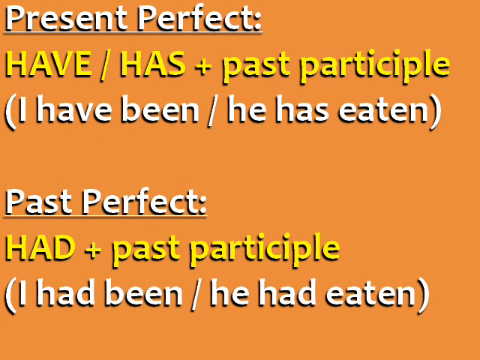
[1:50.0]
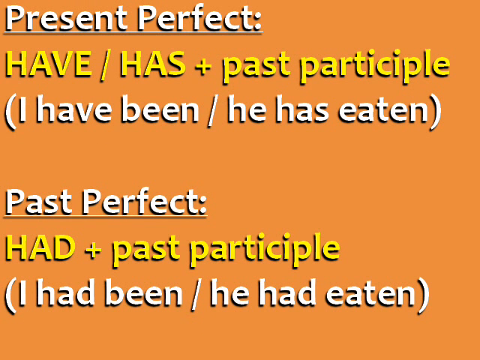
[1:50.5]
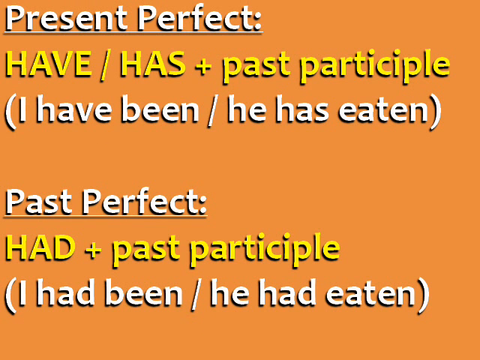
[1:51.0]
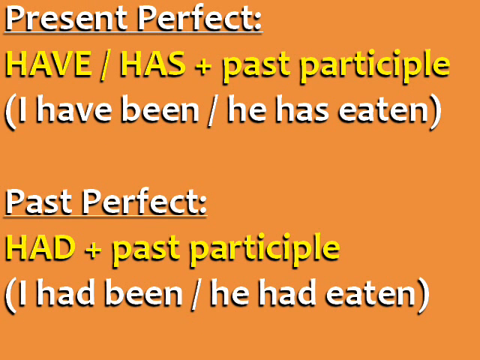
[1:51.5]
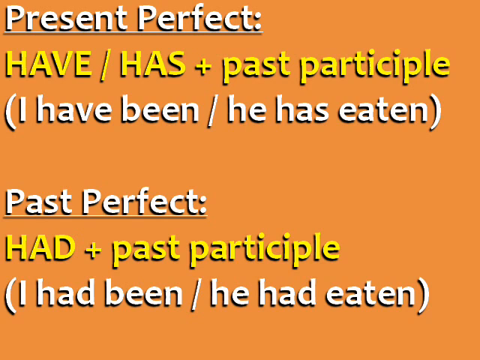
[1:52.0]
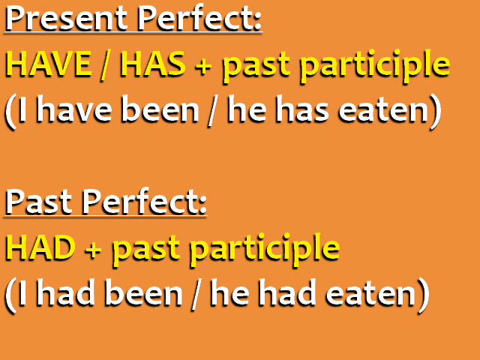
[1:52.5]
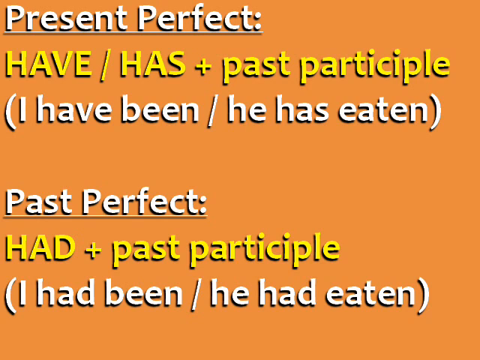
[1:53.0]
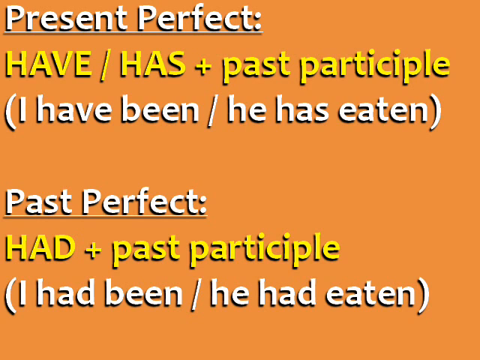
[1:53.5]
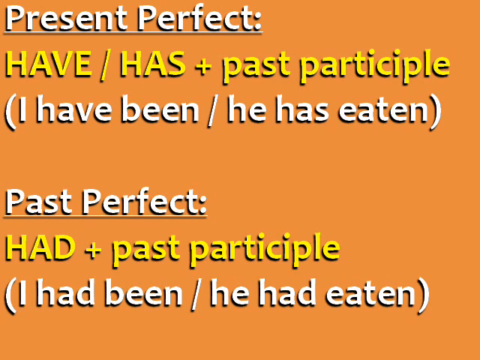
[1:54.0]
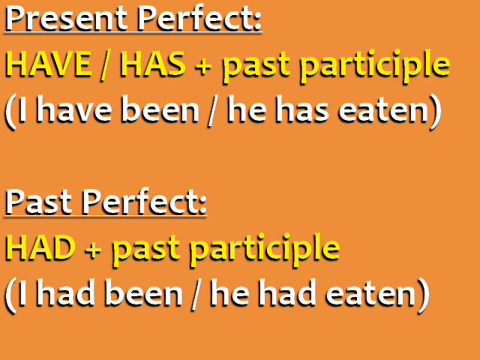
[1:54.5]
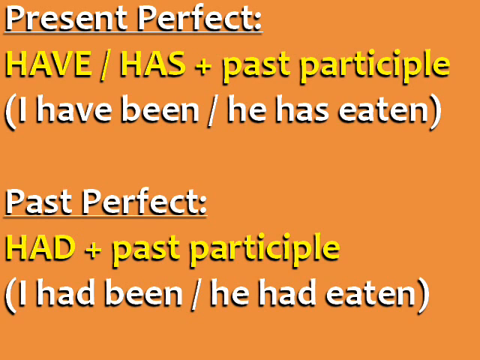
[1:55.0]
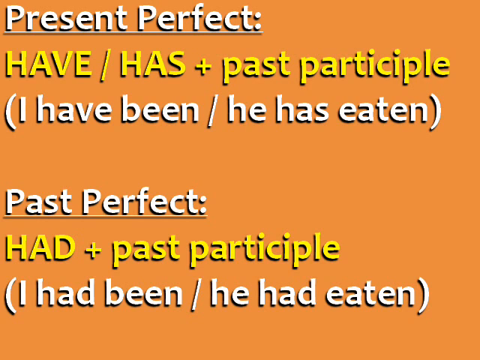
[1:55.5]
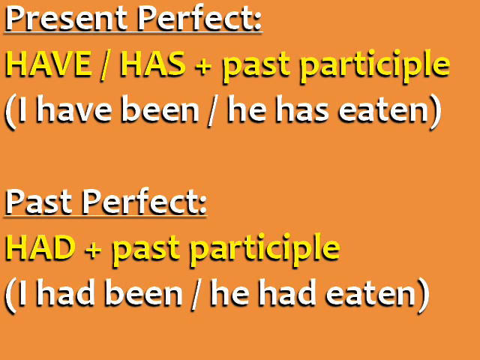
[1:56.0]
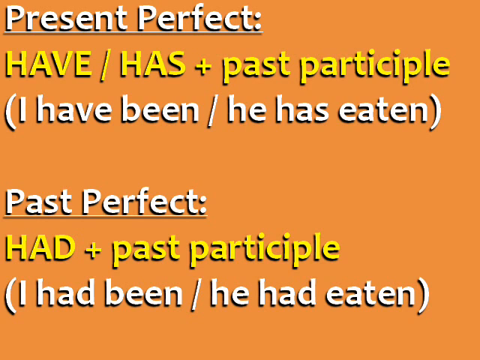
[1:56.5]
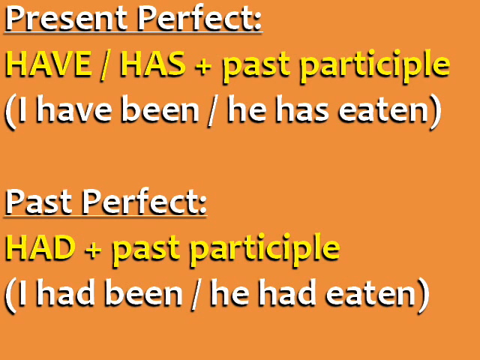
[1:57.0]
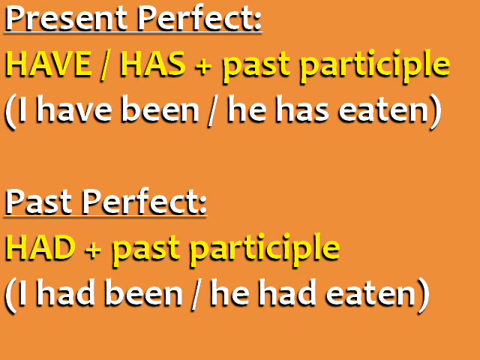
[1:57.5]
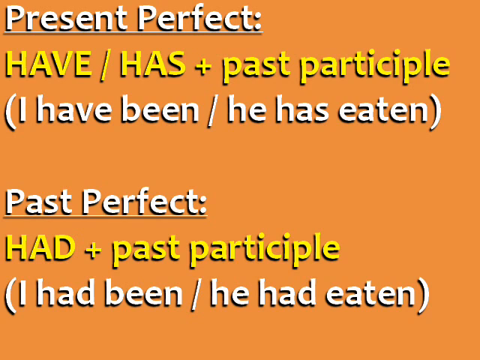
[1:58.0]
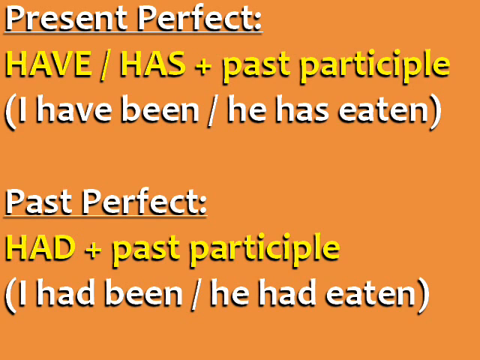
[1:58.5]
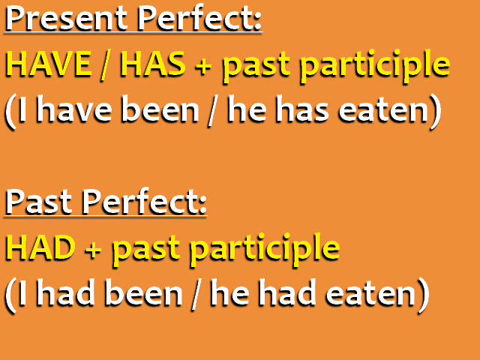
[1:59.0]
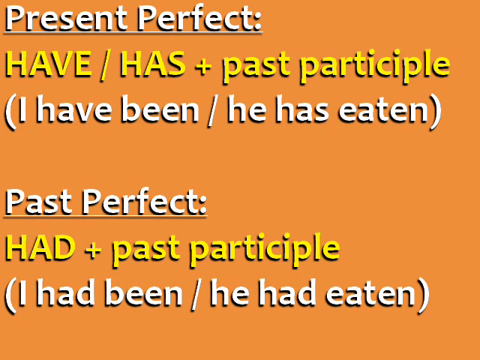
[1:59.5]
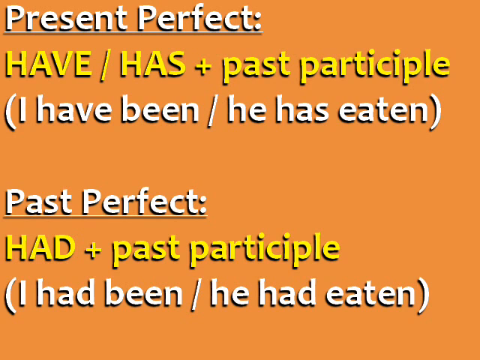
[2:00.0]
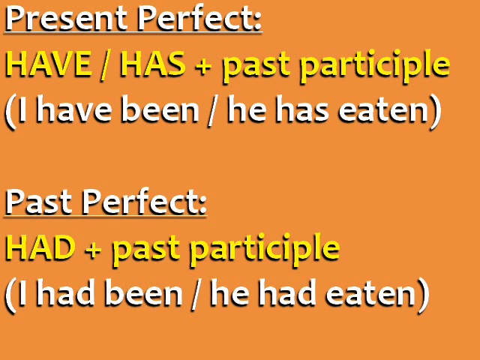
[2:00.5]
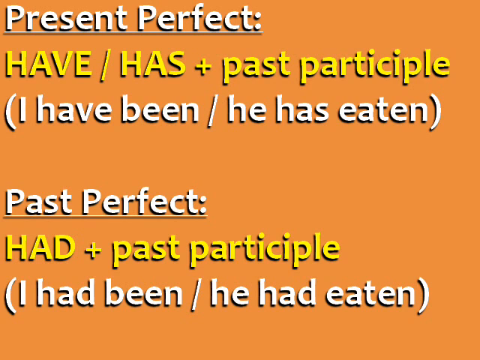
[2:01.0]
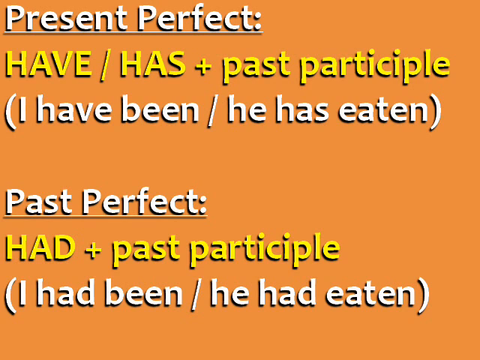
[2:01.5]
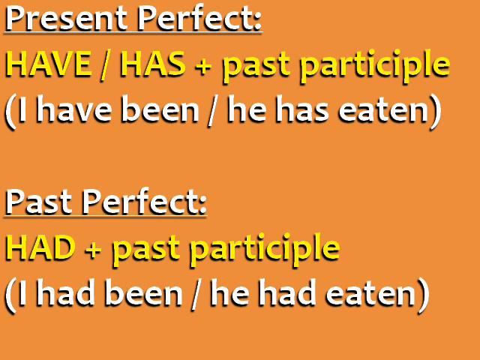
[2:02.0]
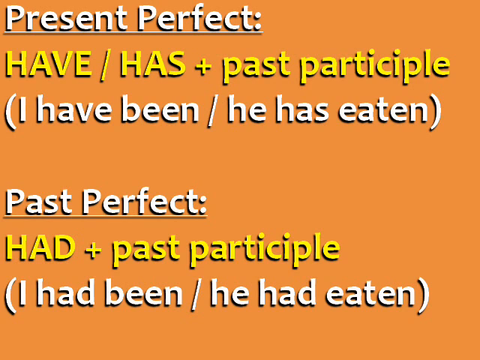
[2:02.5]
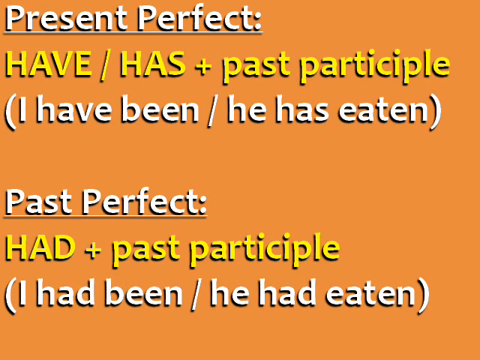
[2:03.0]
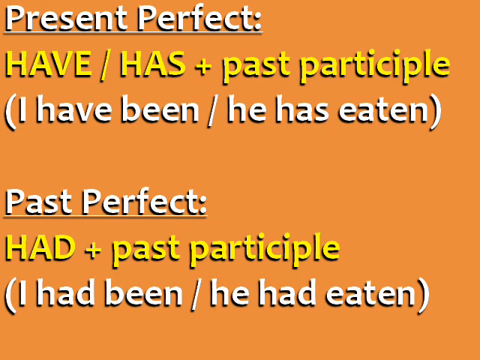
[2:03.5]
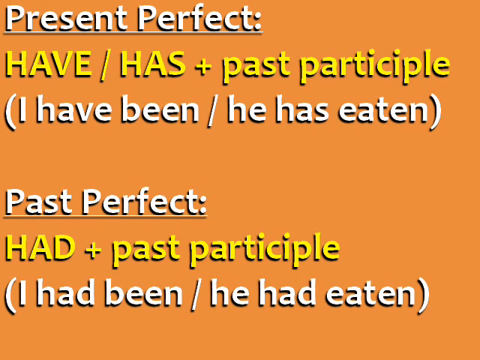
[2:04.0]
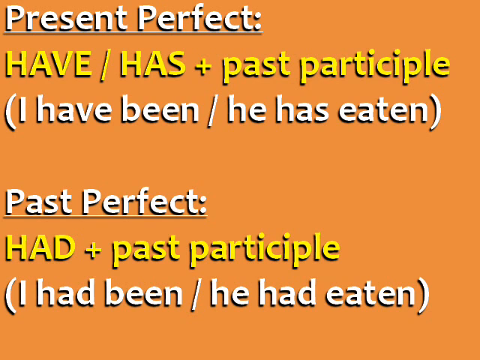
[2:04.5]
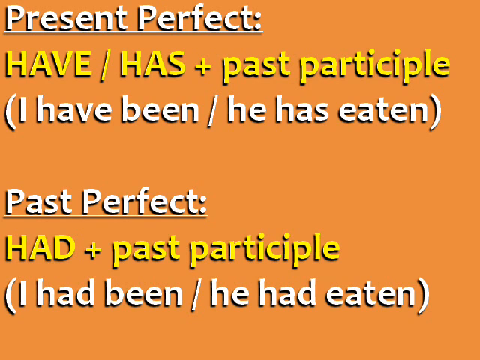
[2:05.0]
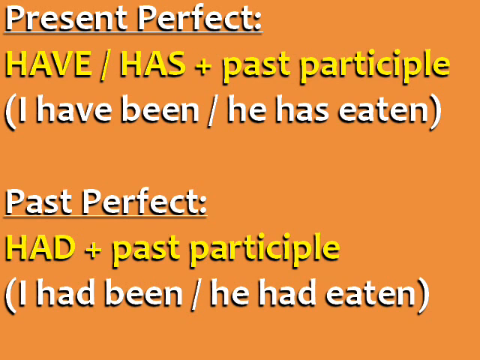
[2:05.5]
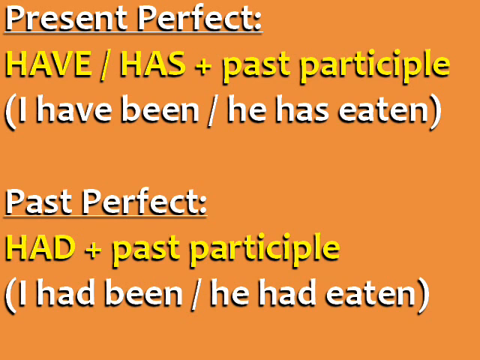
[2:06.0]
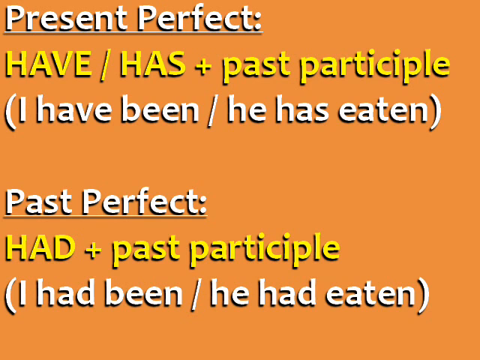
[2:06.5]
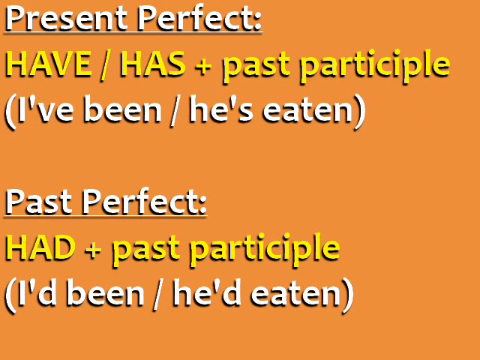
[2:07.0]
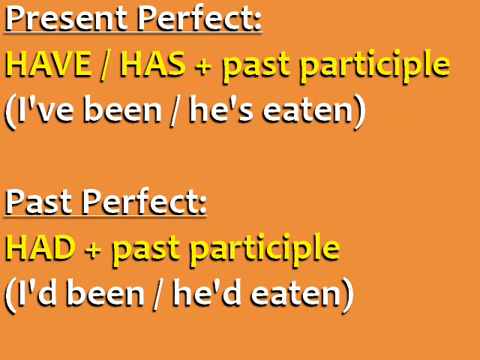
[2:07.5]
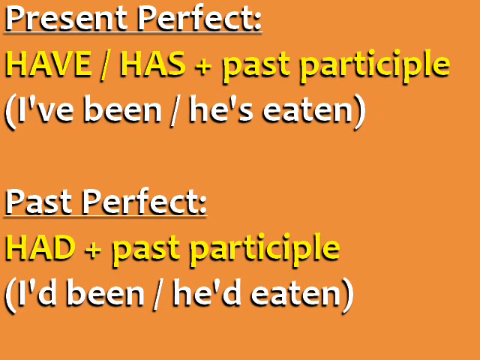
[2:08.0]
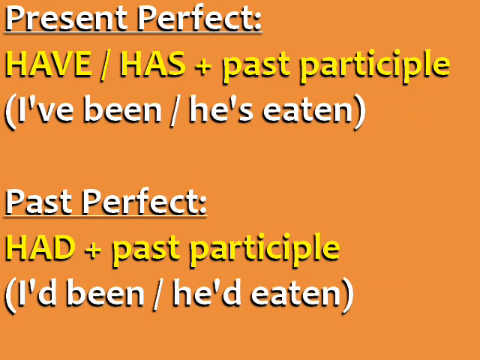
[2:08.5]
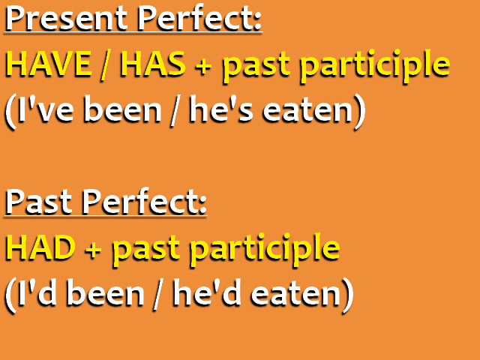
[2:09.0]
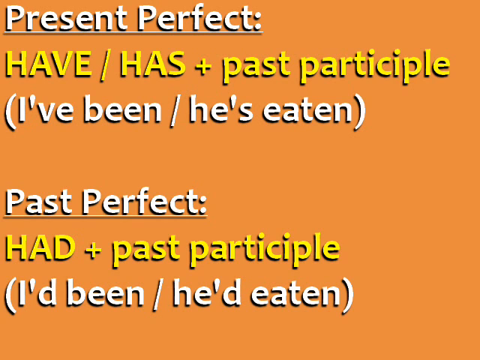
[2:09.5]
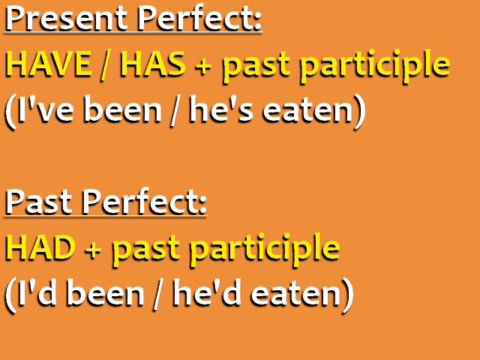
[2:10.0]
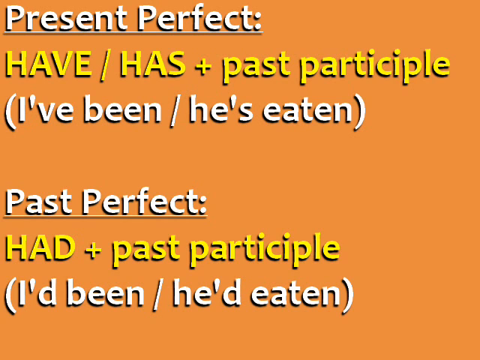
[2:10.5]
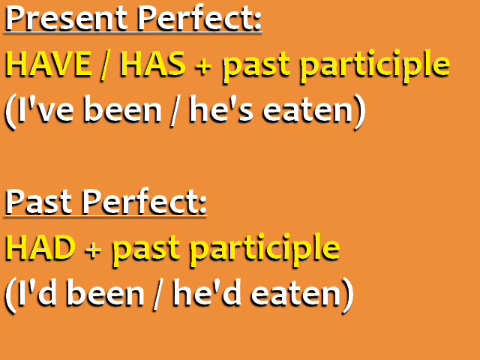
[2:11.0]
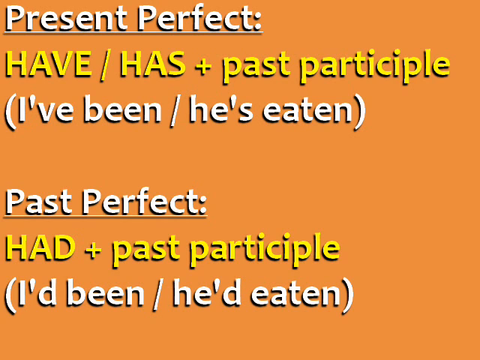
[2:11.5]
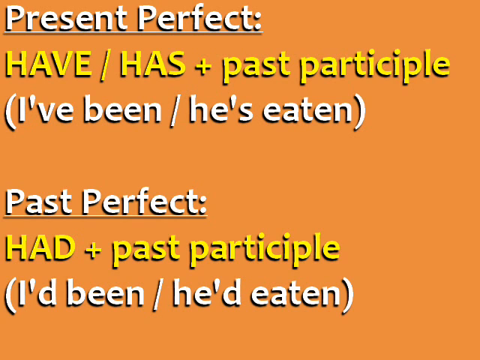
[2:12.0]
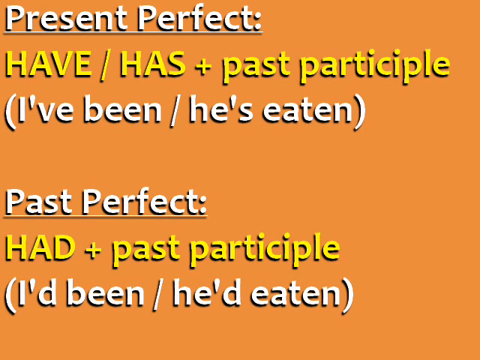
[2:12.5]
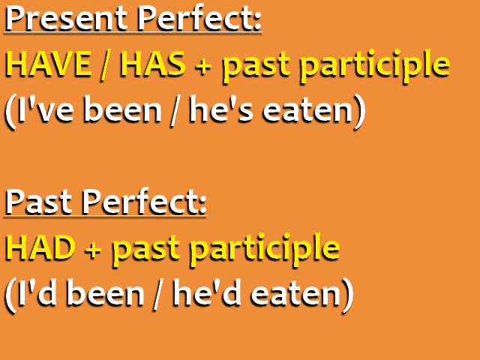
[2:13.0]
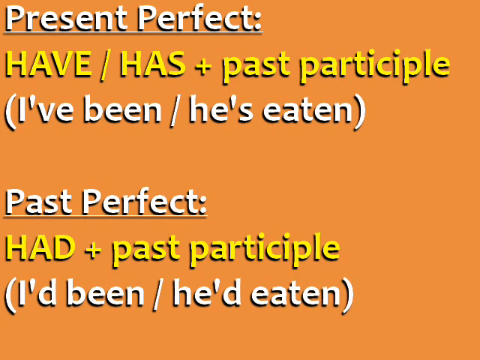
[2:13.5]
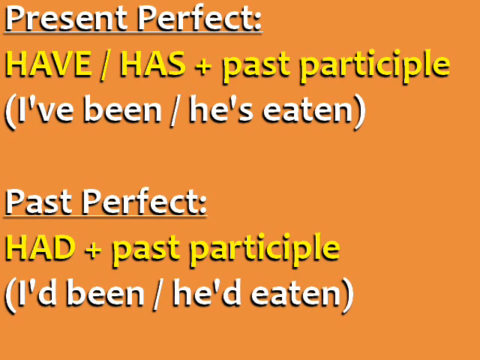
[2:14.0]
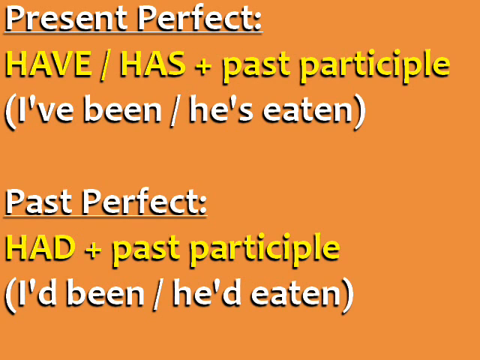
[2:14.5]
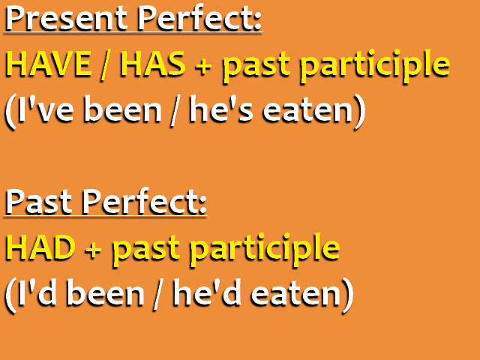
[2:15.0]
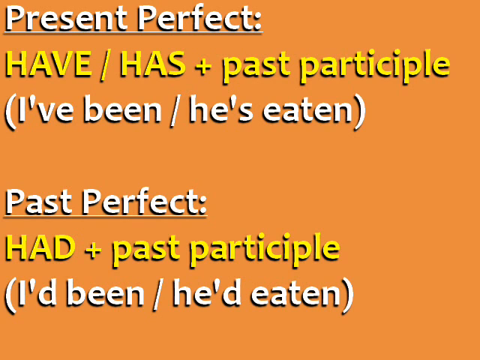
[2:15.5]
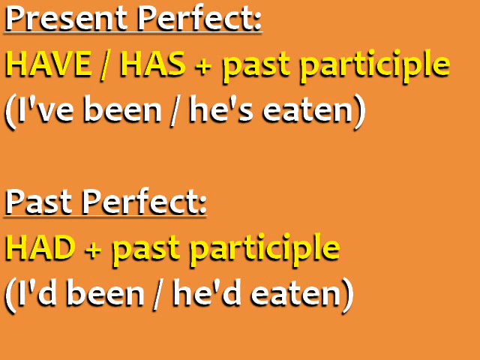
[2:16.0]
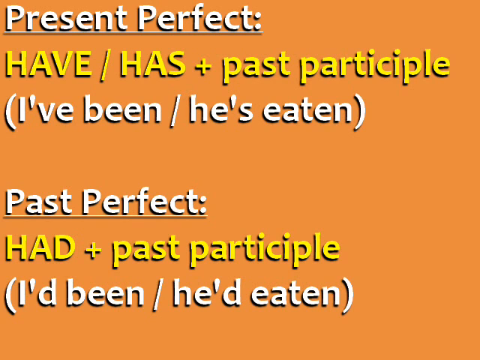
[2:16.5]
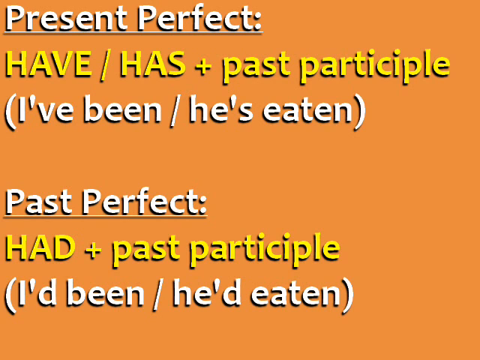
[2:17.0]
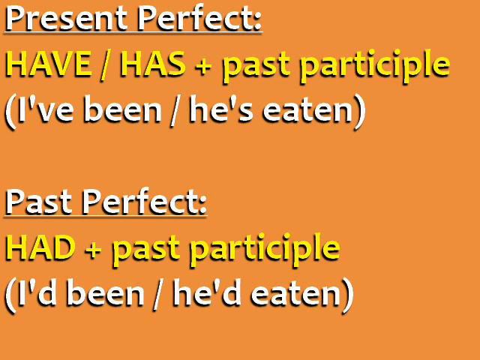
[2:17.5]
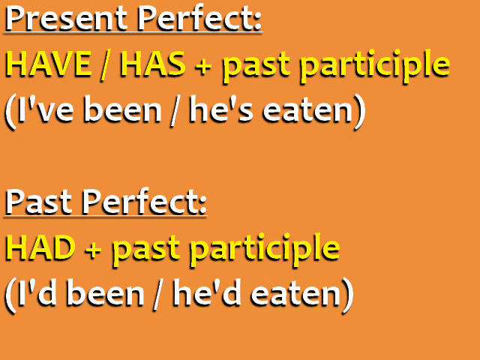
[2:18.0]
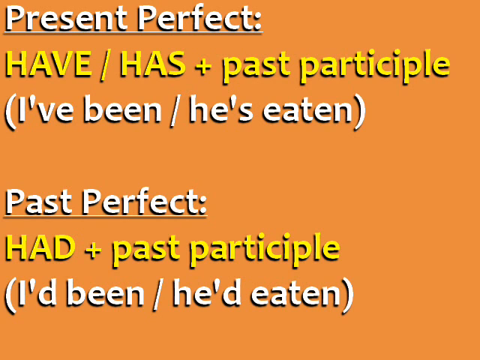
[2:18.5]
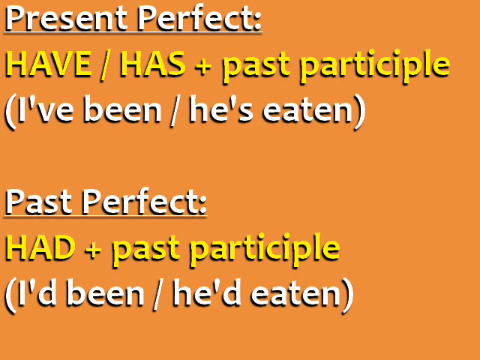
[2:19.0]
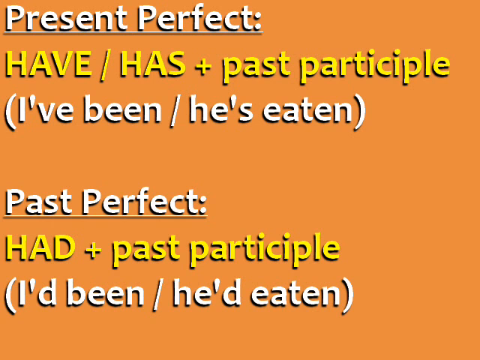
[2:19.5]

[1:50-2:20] The screen focuses on the present perfect, given as "have / has + past participle," with a bracket containing "I have been / he has eaten." Below it is the past perfect, given as "had + past participle," with a bracket highlighting "I have been / he had eaten." More examples follow: "have / has + past participle" is highlighted along with "I have been" and "he has been" as present perfect, and for the past perfect a "had" formula is highlighted with "he had been" below as examples.